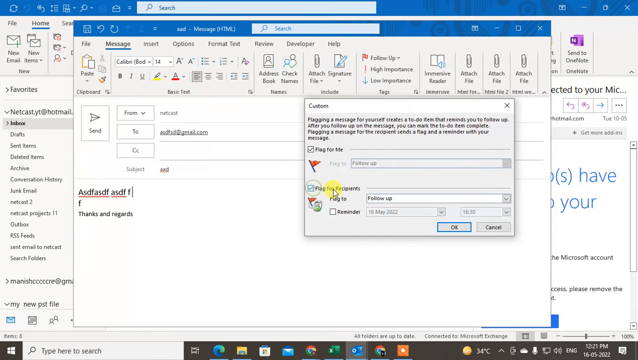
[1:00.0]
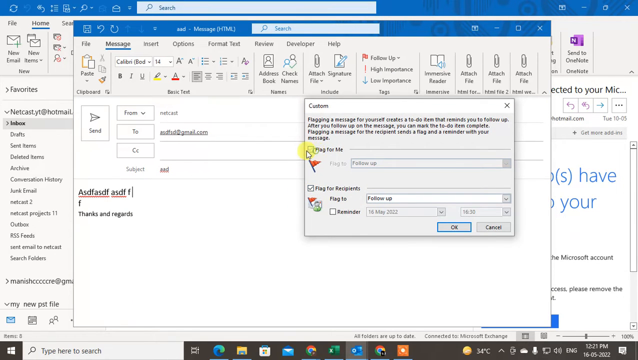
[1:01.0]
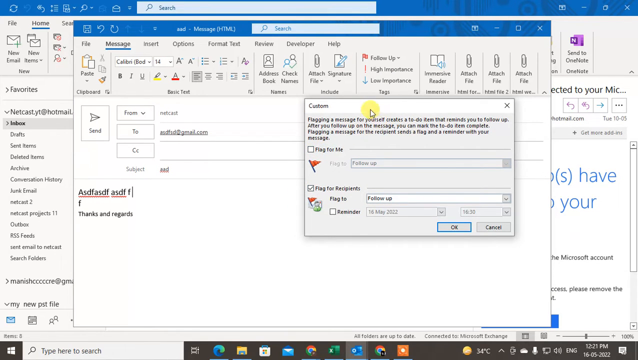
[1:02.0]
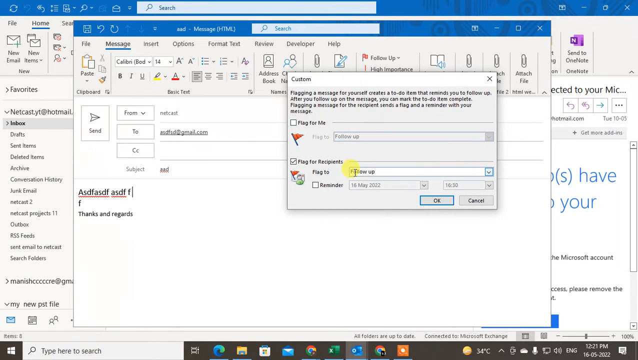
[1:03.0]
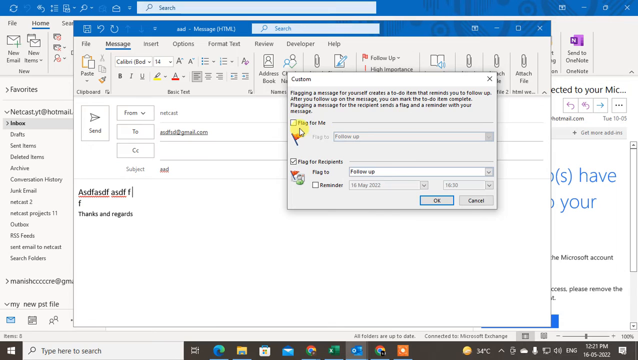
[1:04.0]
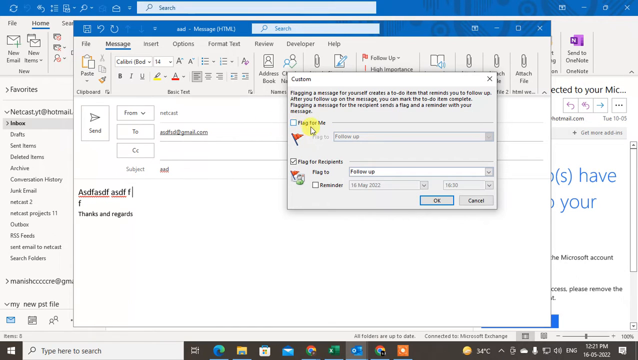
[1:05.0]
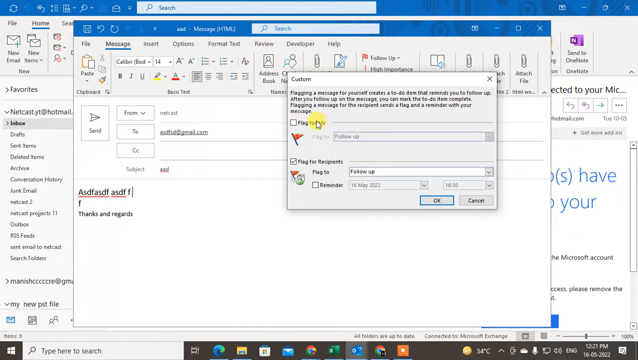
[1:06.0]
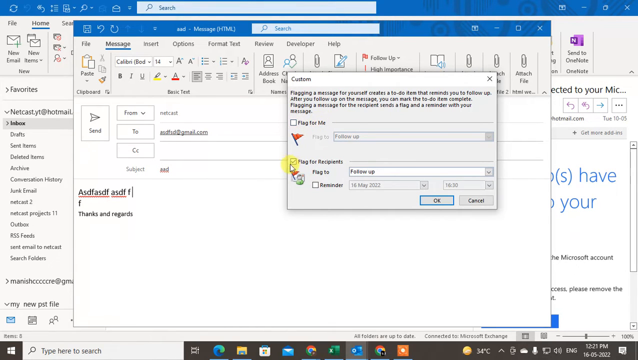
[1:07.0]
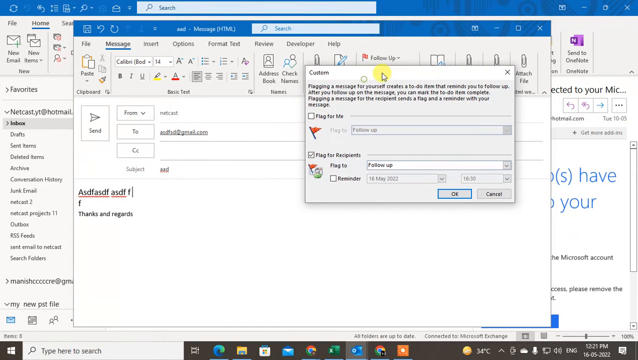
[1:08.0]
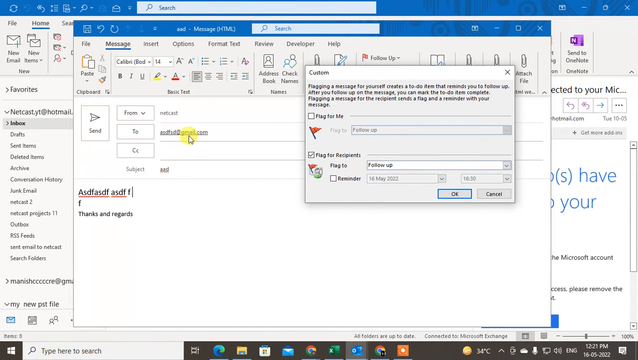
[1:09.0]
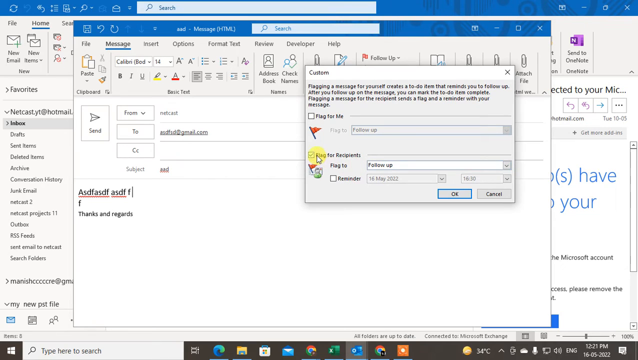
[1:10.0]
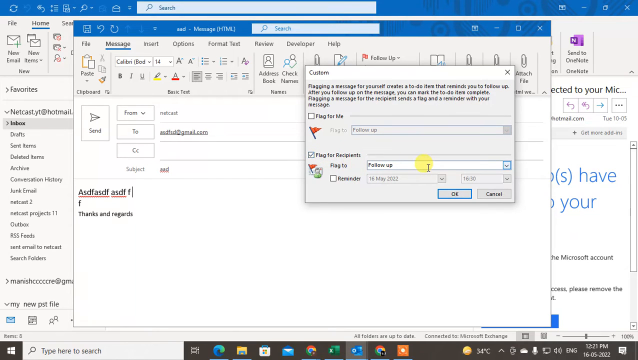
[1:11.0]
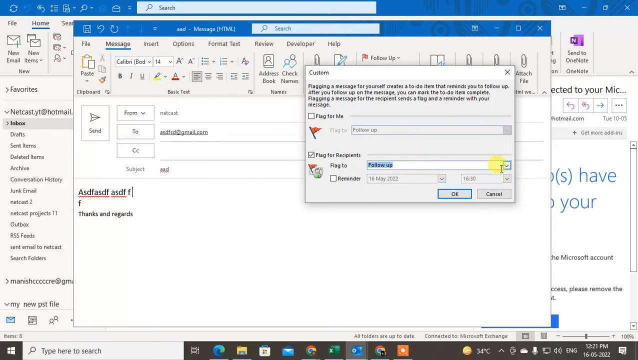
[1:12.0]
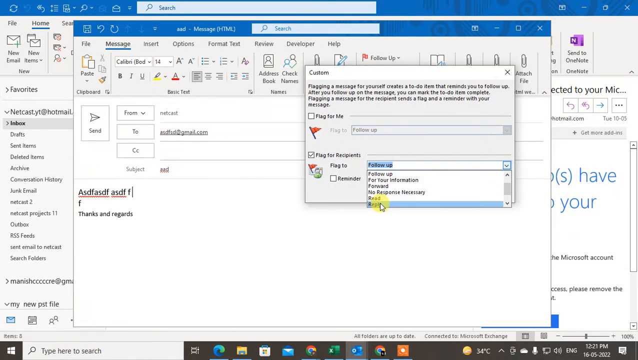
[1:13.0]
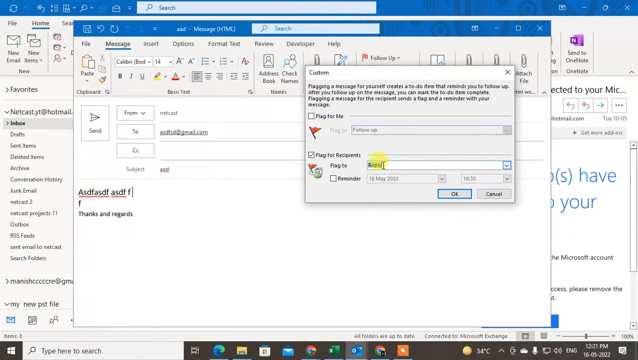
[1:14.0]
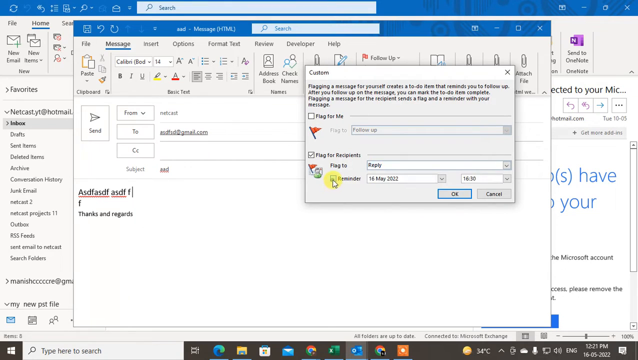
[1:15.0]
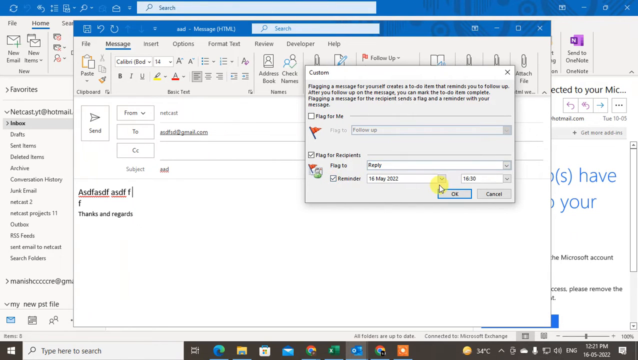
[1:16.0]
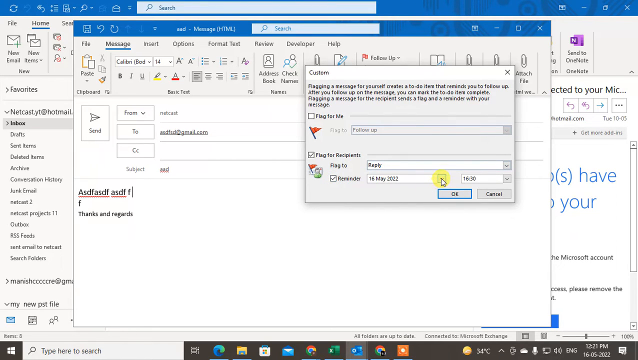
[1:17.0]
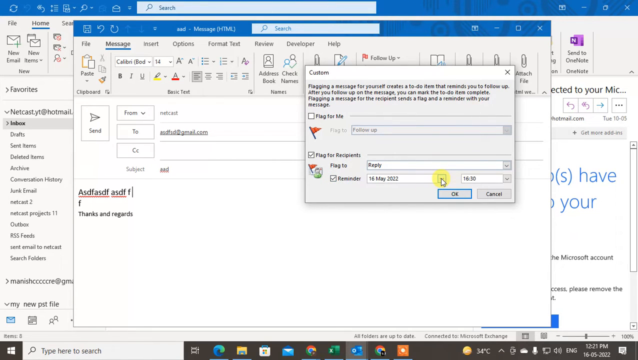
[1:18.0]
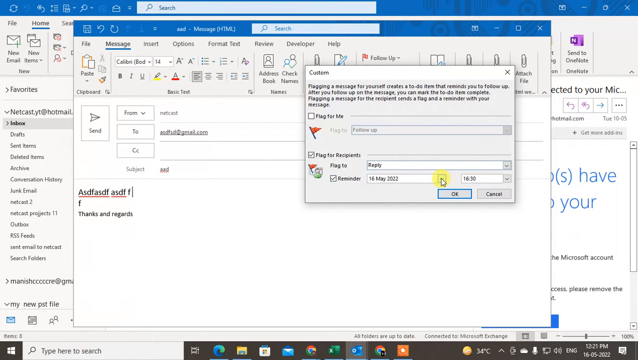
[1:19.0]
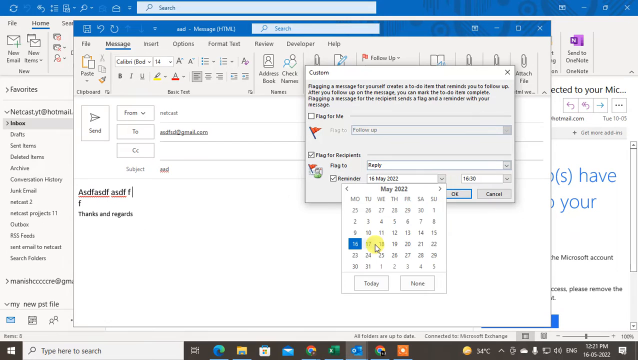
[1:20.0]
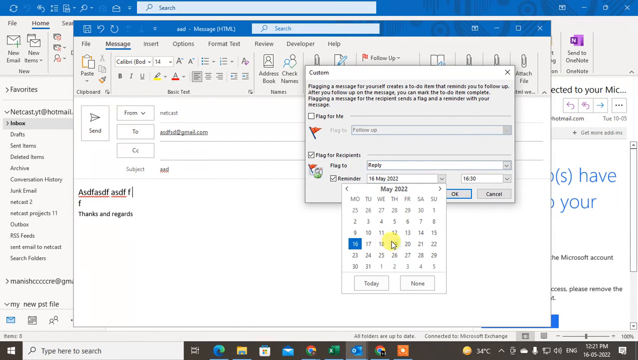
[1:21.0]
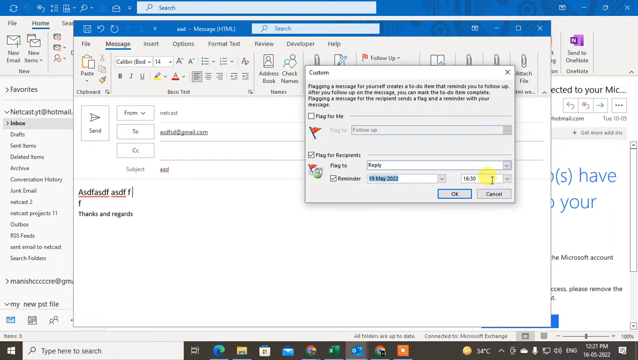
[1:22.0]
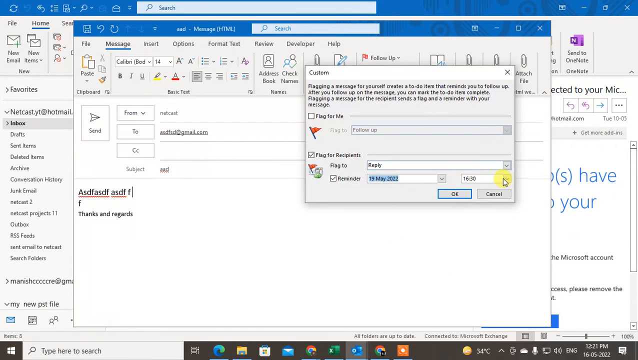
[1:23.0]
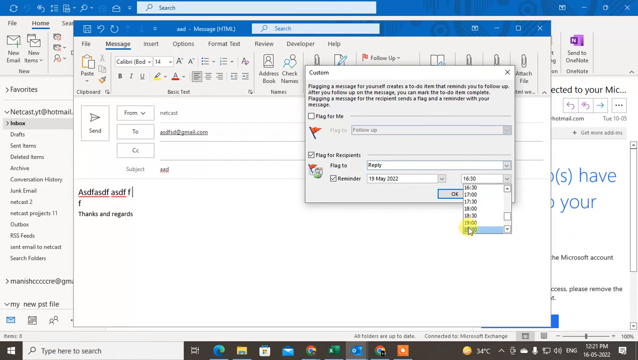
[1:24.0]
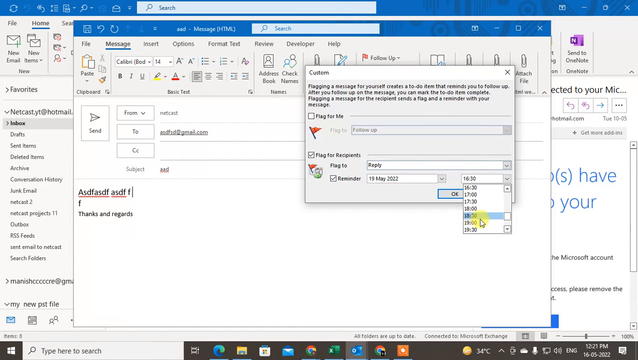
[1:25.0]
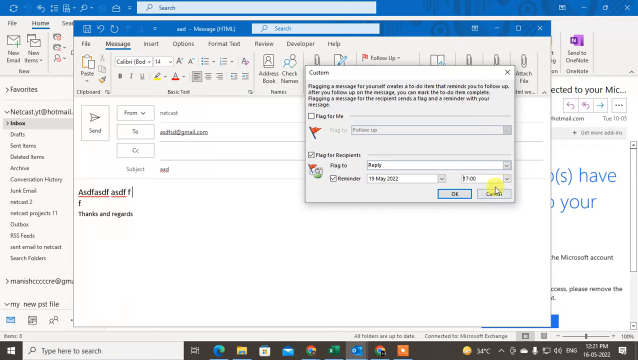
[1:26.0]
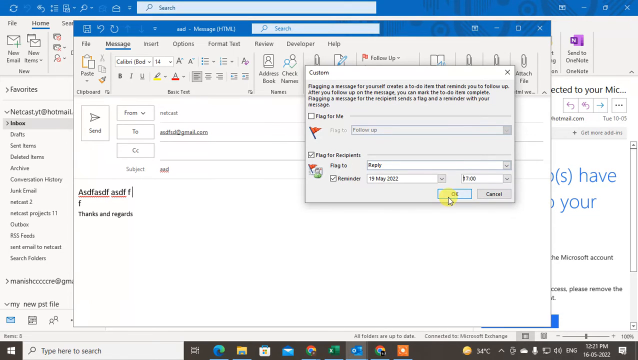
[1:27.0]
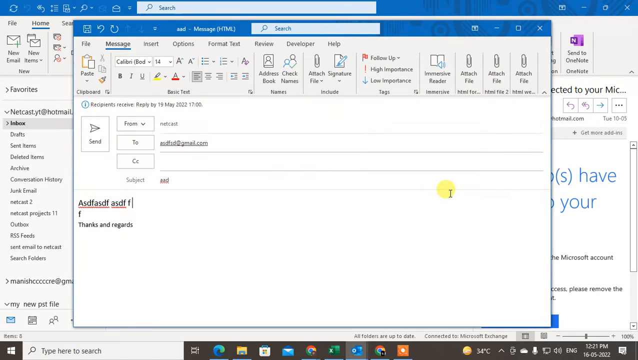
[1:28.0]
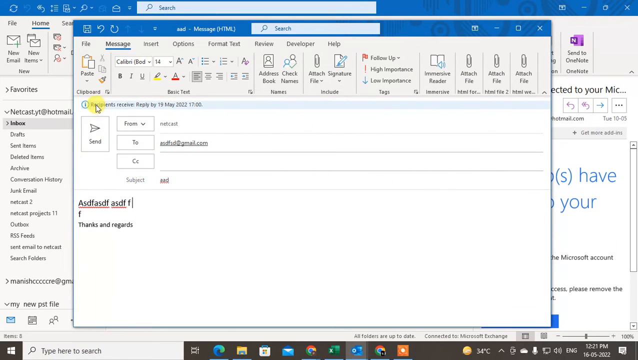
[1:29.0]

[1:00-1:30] The primary program is open along with a secondary window that seems to show the email message title as "AAD". The from field is the user themselves, netcast, and the to field is "asdfsd@gmail.com", a gibberish address. A smaller pop-up titled "custom" appears, with text underneath stating "flagging a custom message for yourself creates a to-do item that reminds you to follow up. After you follow up on that message, you can make that to-do item complete. Flagging a message for the recipient sends a flag and a reminder with your message." The cursor arrow is over an empty, unchecked box that says "flag for me", while the box at the bottom that says "flag for recipients" is checked.